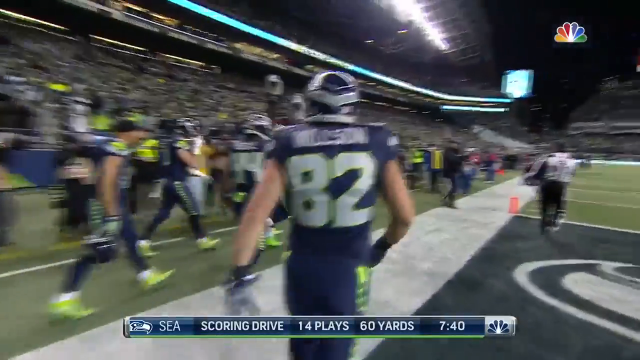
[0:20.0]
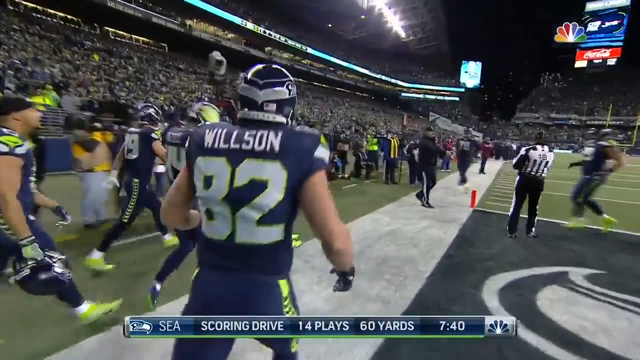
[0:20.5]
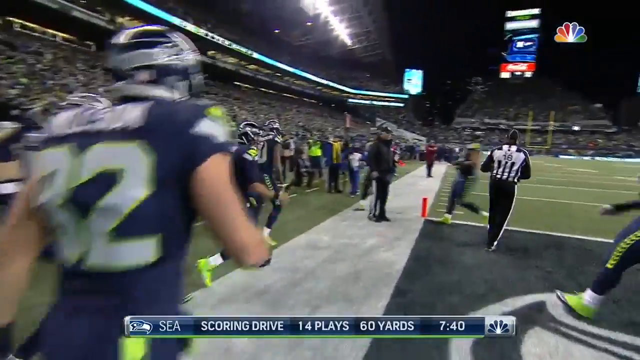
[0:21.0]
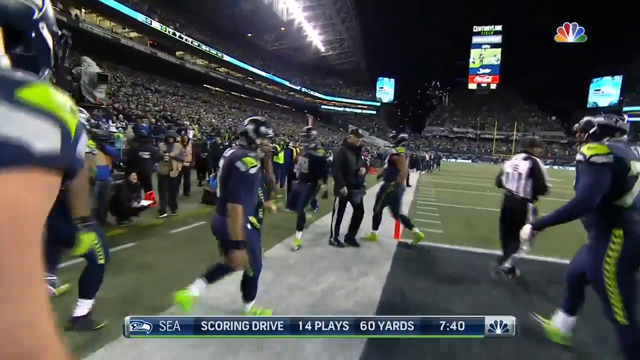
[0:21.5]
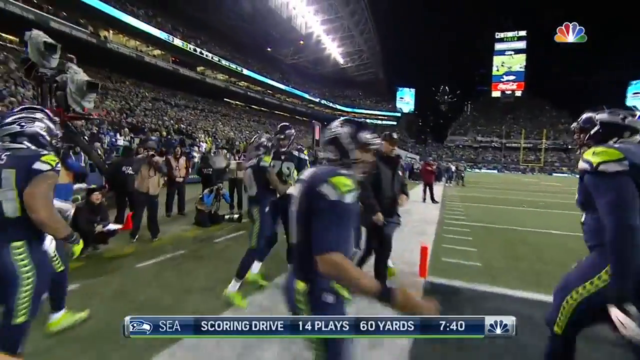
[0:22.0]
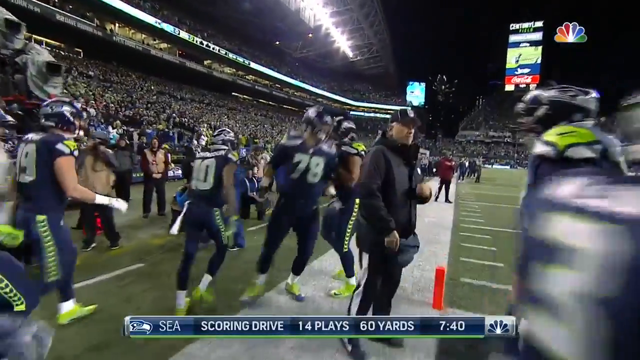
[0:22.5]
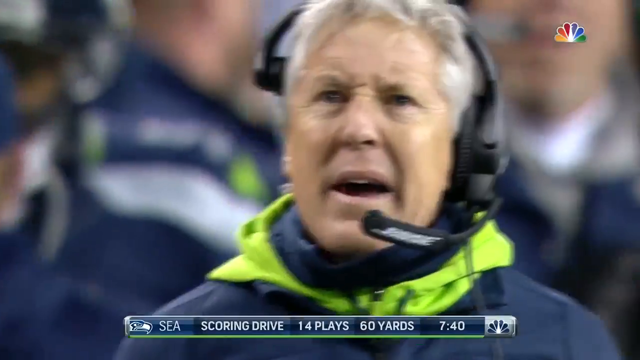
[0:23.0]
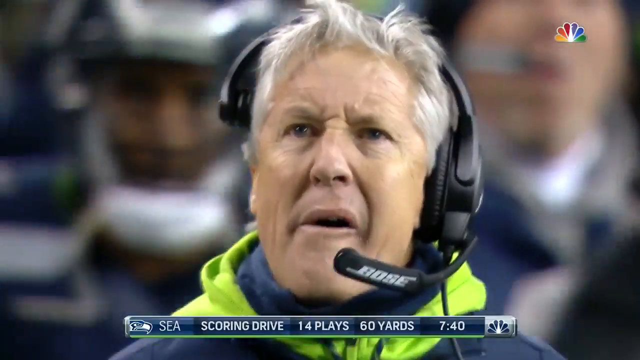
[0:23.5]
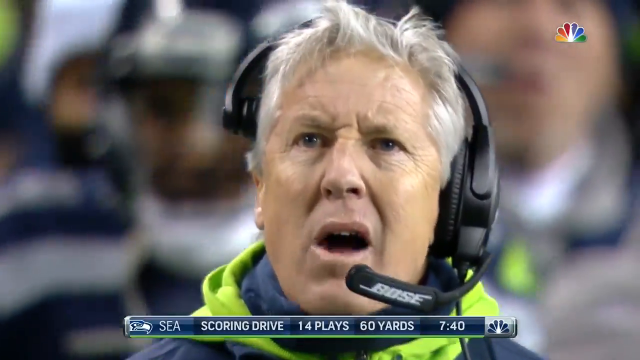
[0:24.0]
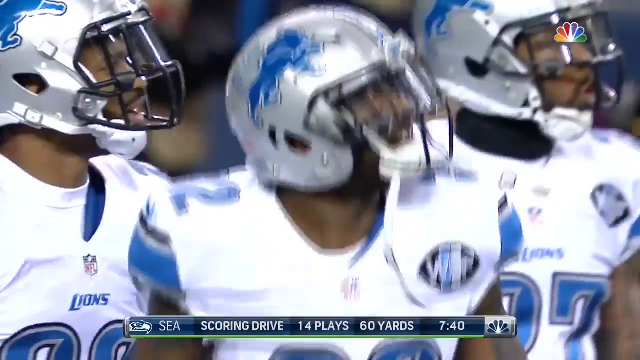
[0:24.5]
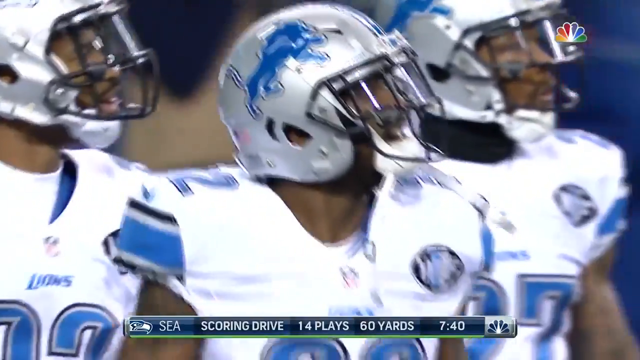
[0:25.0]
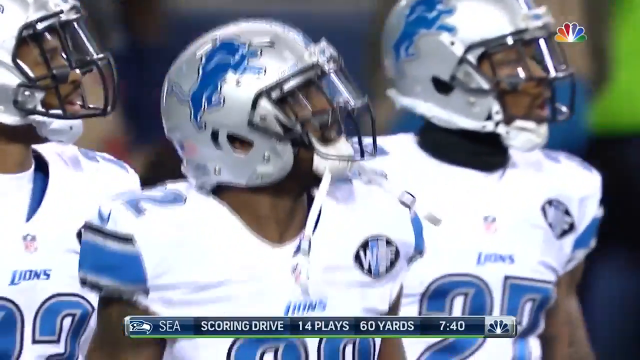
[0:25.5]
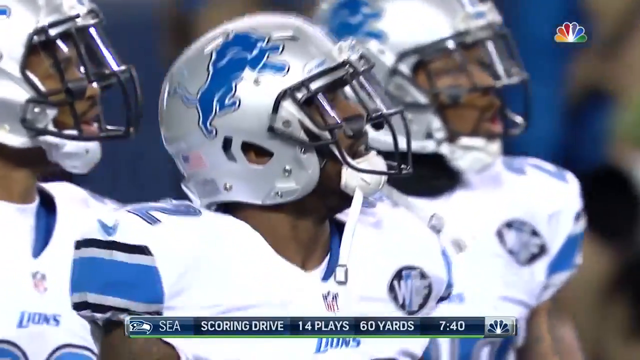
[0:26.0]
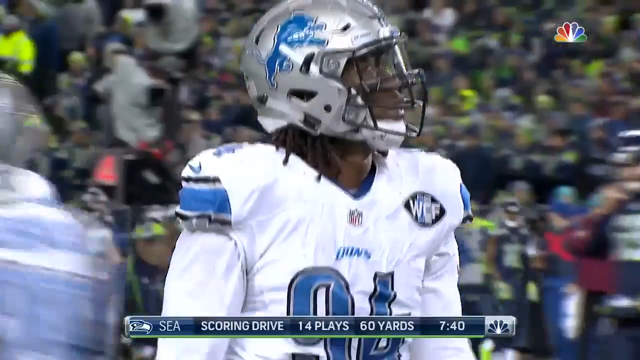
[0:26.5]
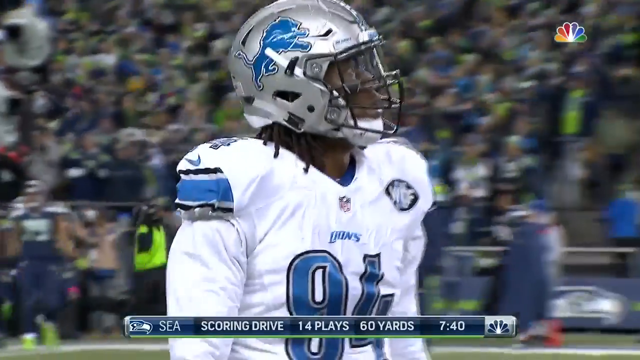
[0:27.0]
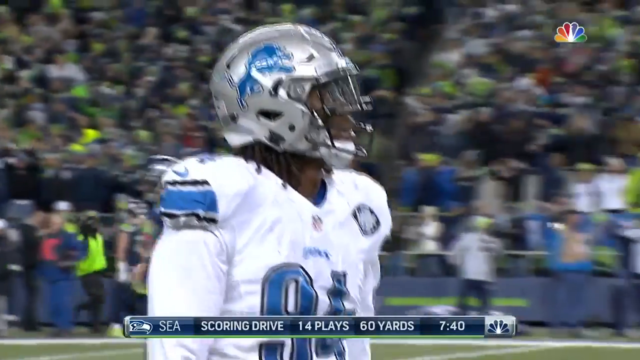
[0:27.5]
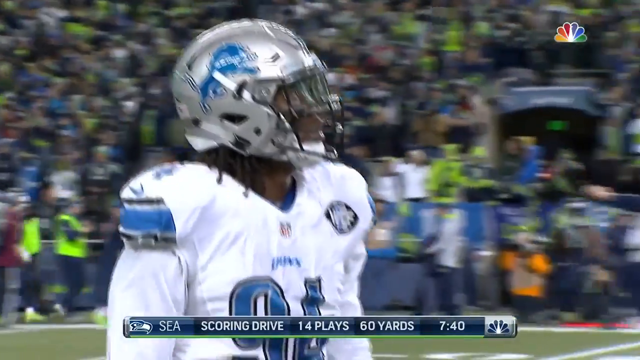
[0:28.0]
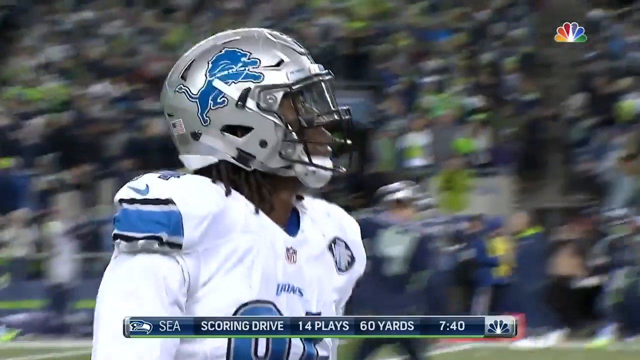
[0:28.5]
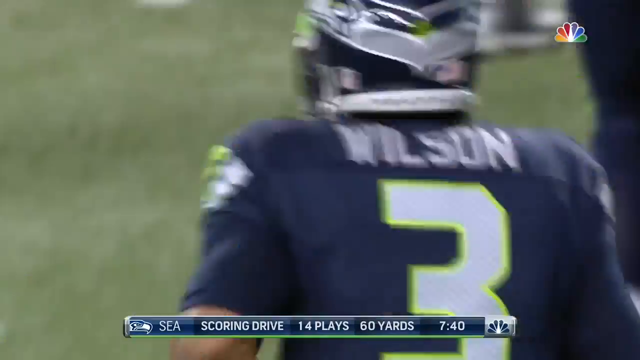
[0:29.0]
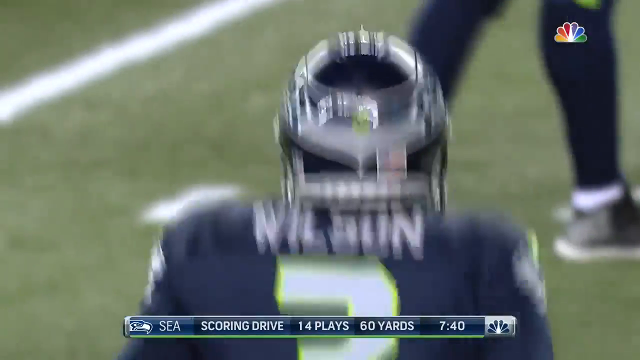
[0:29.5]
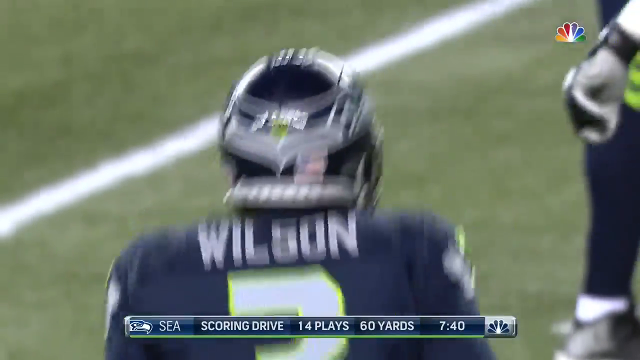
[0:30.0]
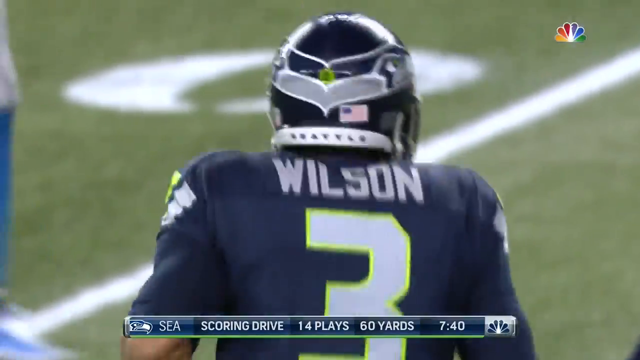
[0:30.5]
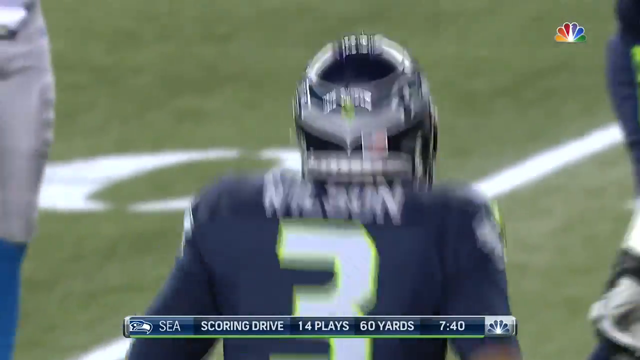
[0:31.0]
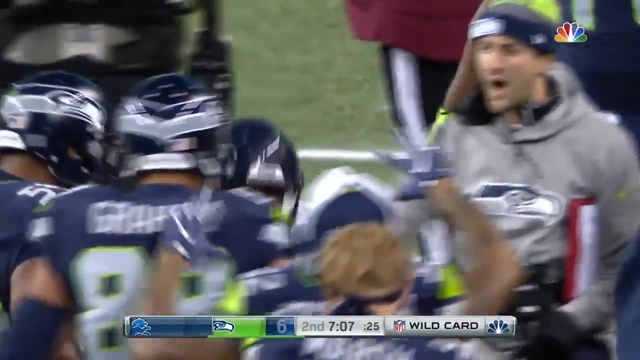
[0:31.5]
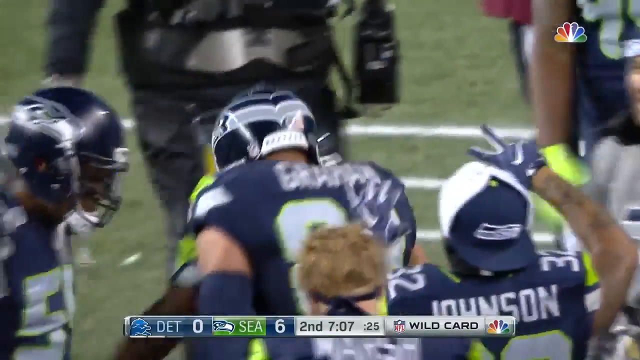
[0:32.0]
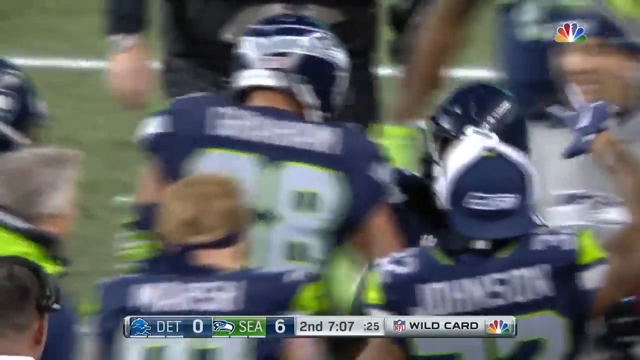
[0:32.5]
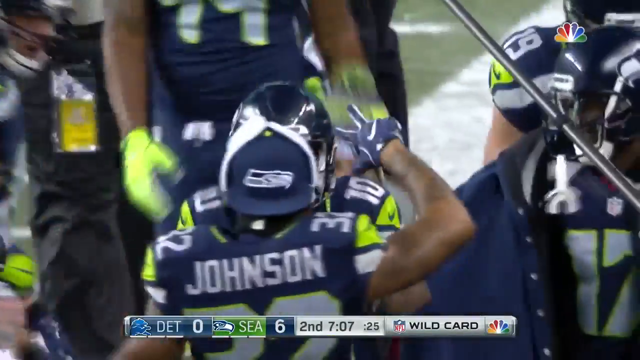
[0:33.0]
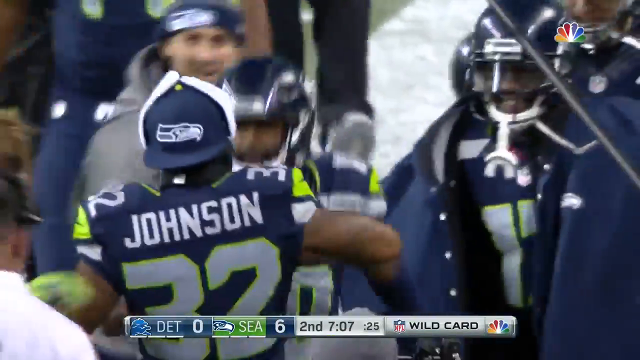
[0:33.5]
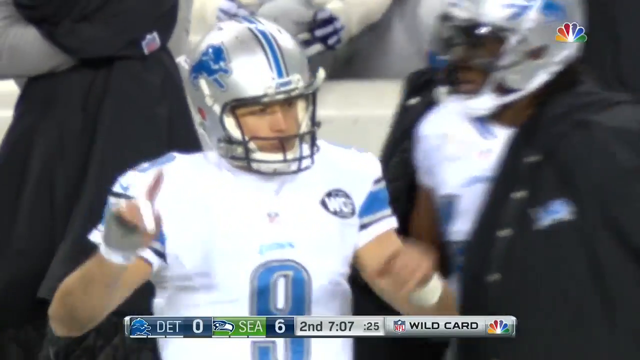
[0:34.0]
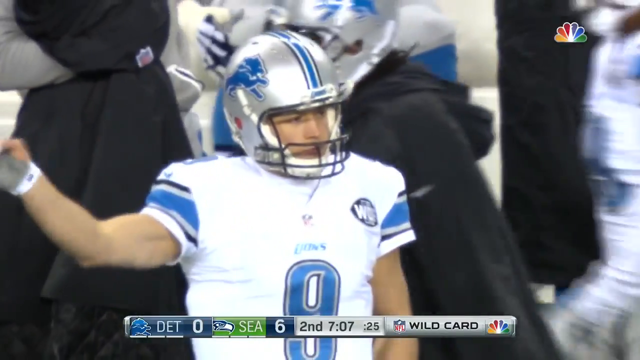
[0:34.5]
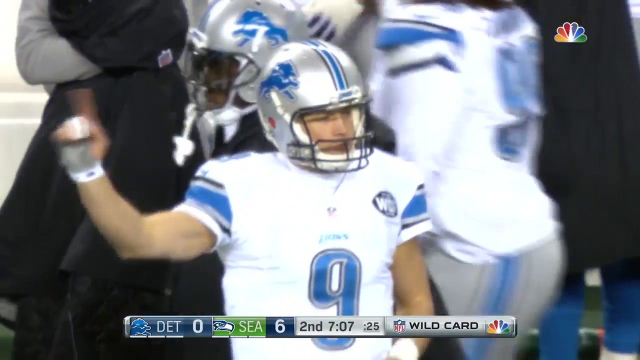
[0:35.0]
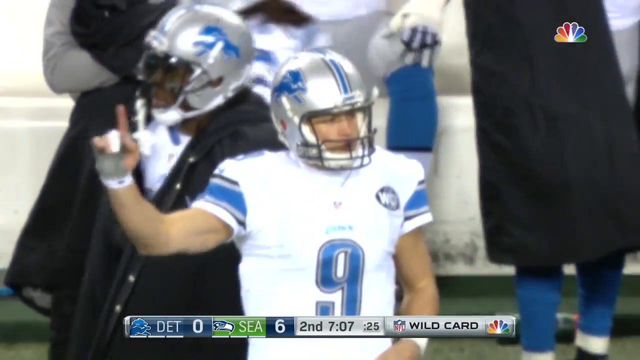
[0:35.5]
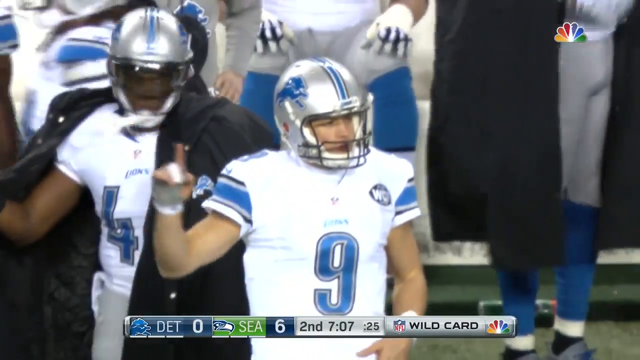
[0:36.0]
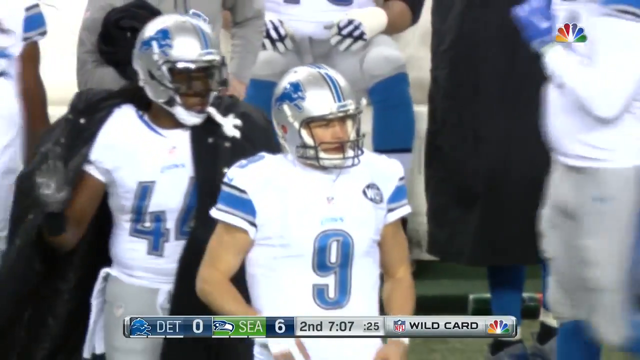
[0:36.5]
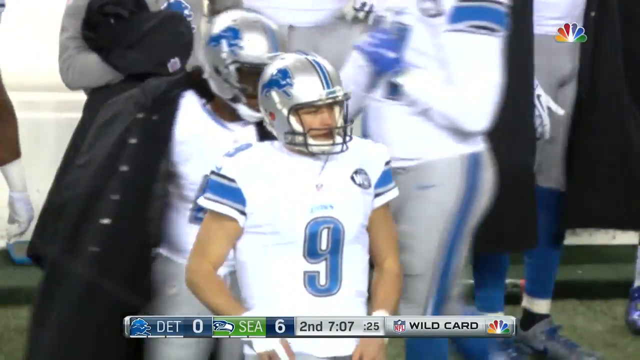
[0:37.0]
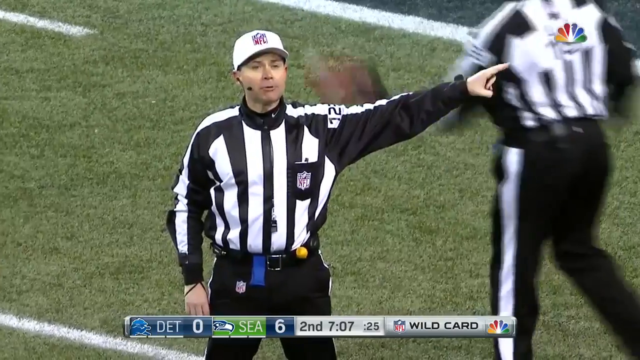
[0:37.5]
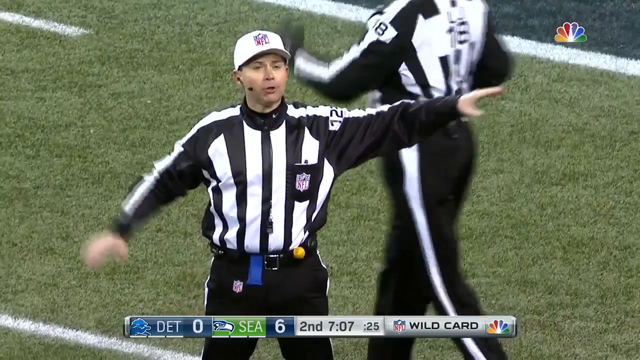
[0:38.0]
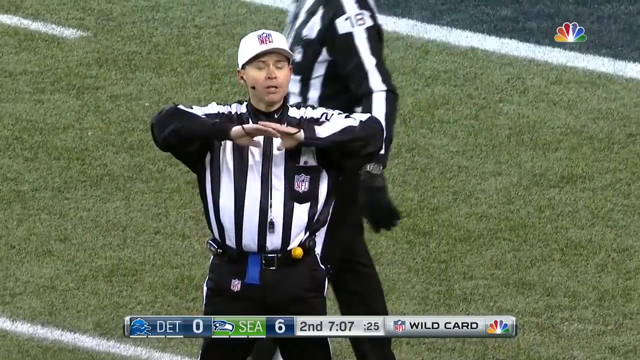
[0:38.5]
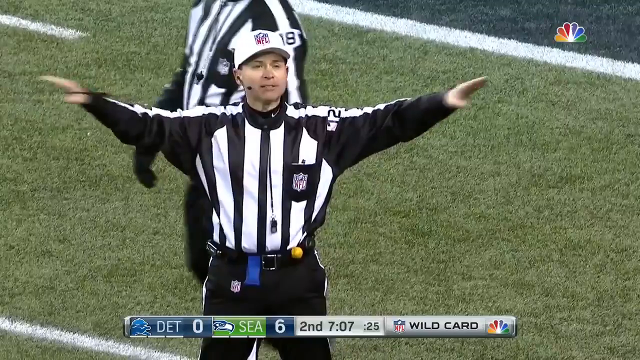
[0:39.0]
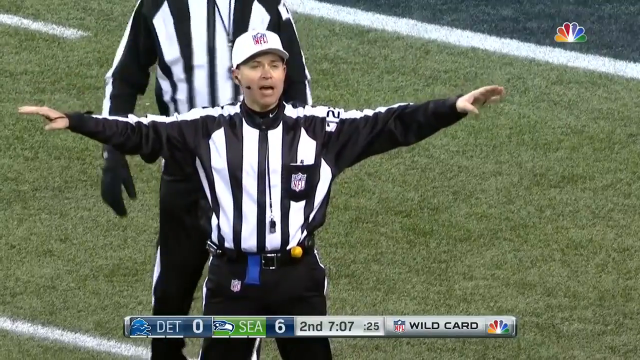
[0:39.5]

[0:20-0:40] The Seahawks quarterback and various players celebrate the touchdown together. Stats for the Seahawks appear at the bottom of the screen reading "scoring drive, 14 plays, 60 yards, 7 minutes and 40 seconds," with the NBC logo to the right. Seahawks coach Pete Carroll is shown wearing a headset with a Bose logo, chewing gum and looking upward with a mean look on his face. Three Lions players are shown in motion, side by side, looking up to their right, and another Lions player, number 94, looks up in the same direction. The Seahawks quarterback, Russell Wilson, number 3, is shown from behind running. Various Seahawks players continue celebrating, along with a couple of coaches. The Lions quarterback, wearing number 9, points with his right hand. Part of the Lions bench sideline is shown, with players sitting or standing. A referee, seen from the front, points to the right as another referee, number 18, walks by. A penalty is declined and the play stands as a touchdown.